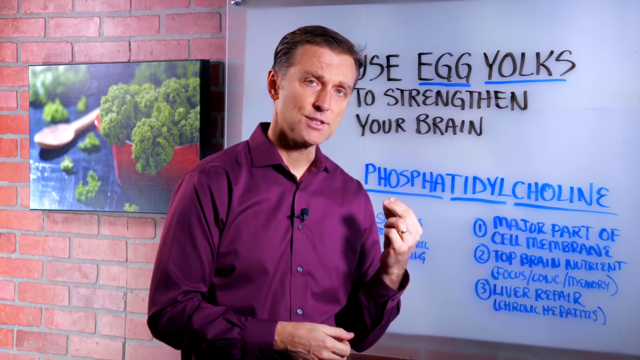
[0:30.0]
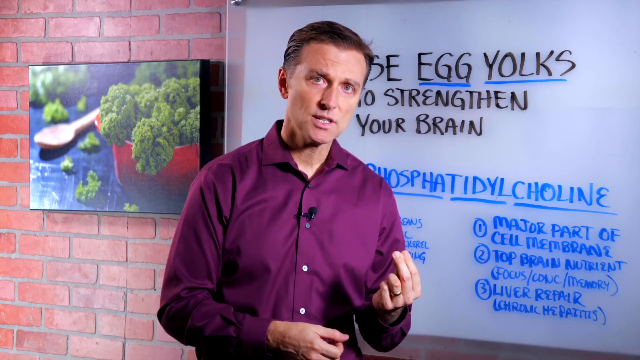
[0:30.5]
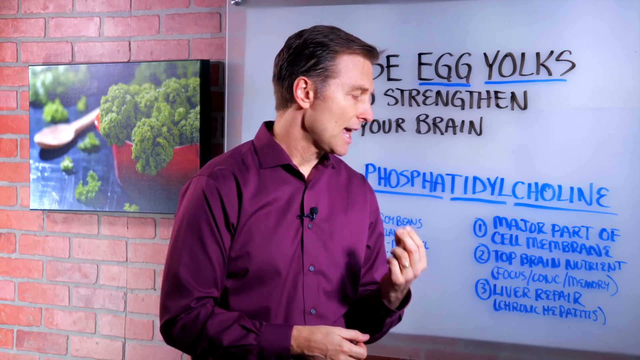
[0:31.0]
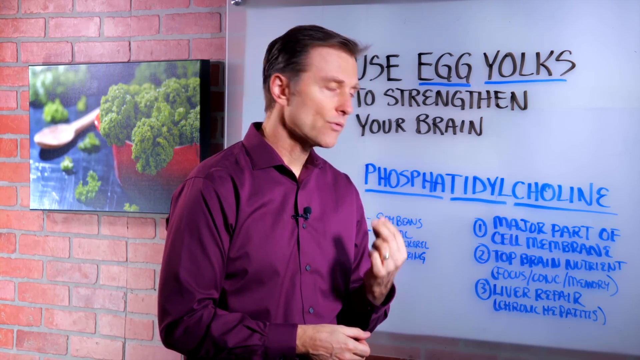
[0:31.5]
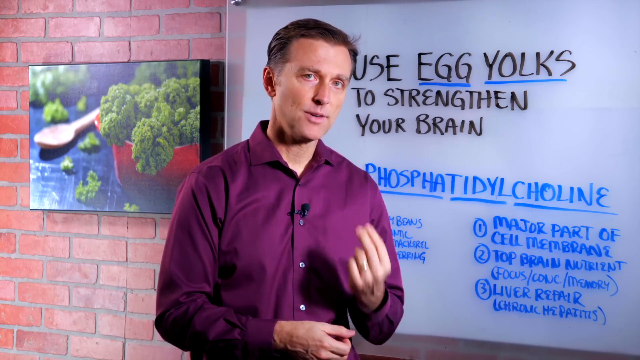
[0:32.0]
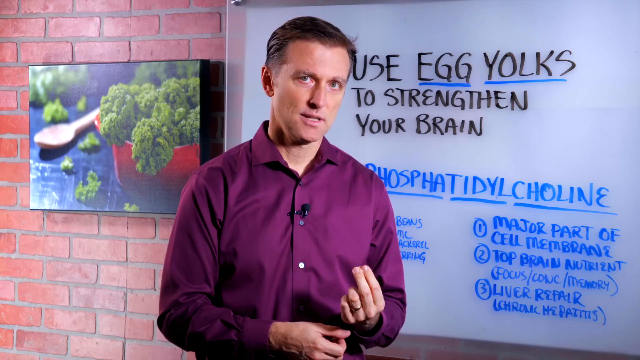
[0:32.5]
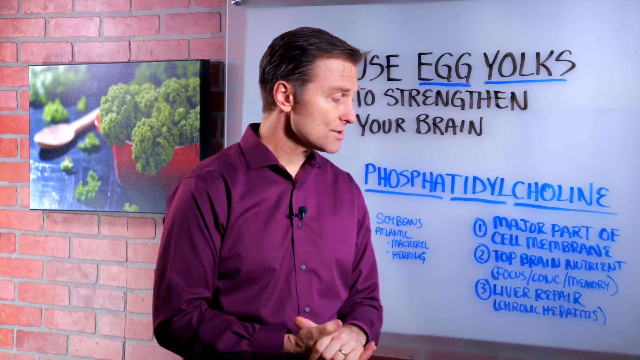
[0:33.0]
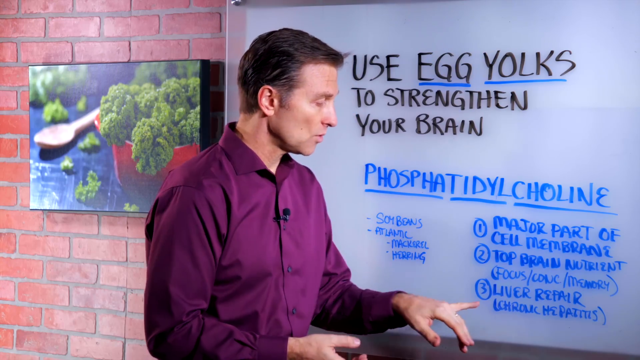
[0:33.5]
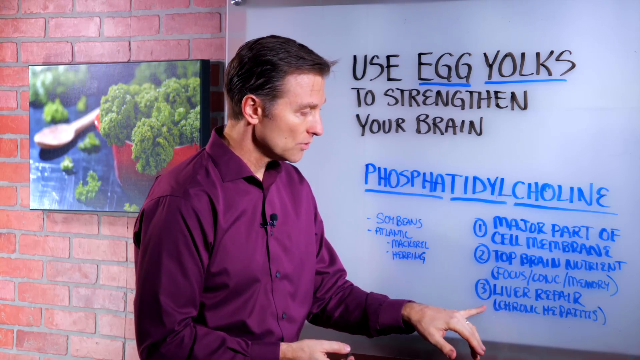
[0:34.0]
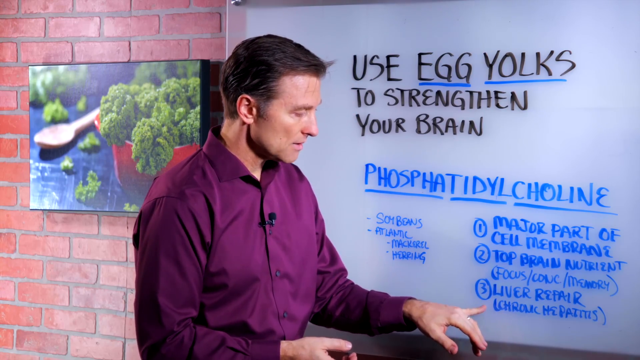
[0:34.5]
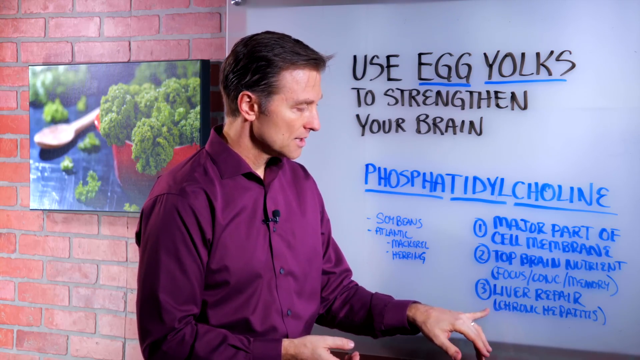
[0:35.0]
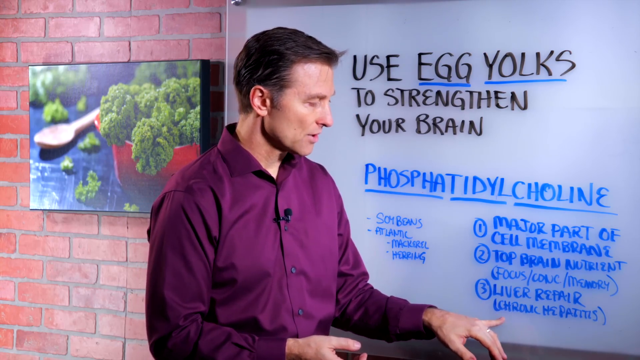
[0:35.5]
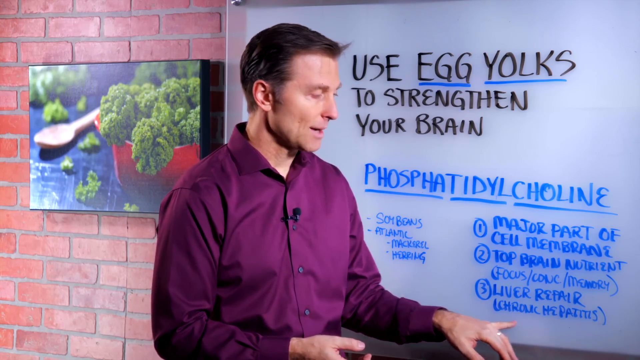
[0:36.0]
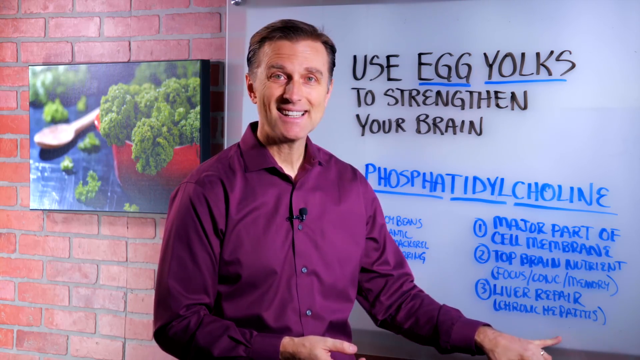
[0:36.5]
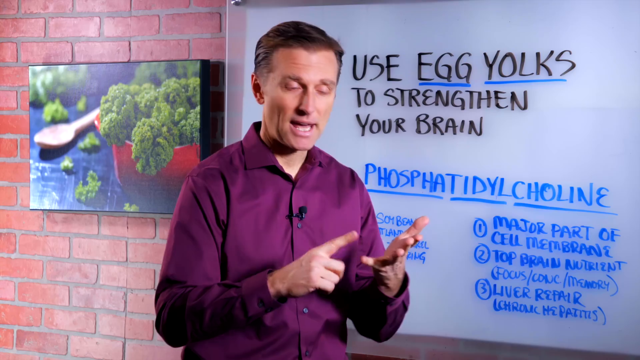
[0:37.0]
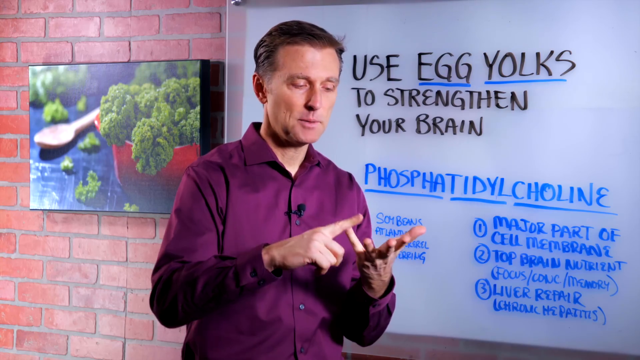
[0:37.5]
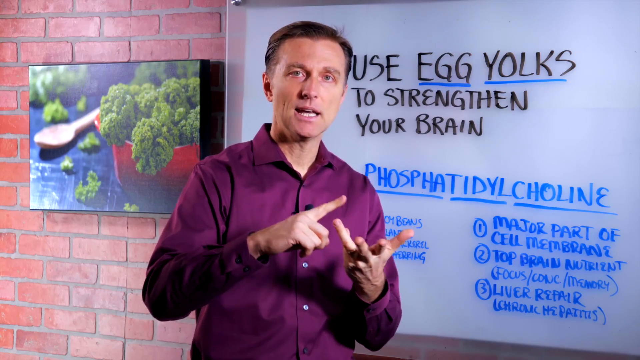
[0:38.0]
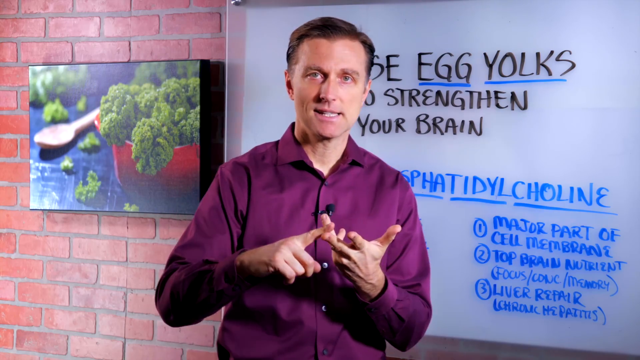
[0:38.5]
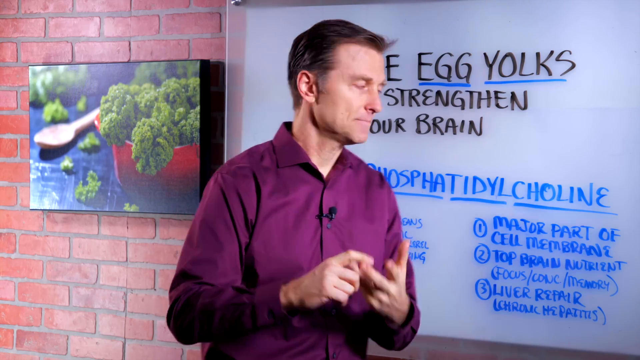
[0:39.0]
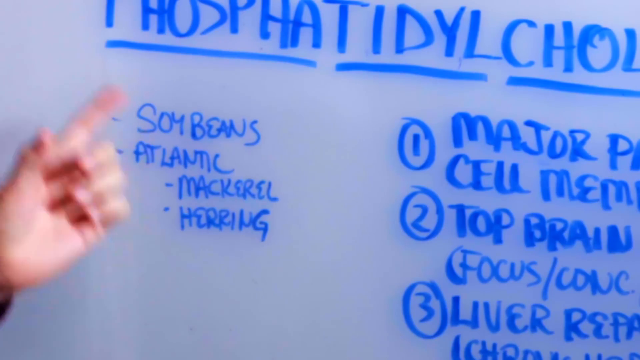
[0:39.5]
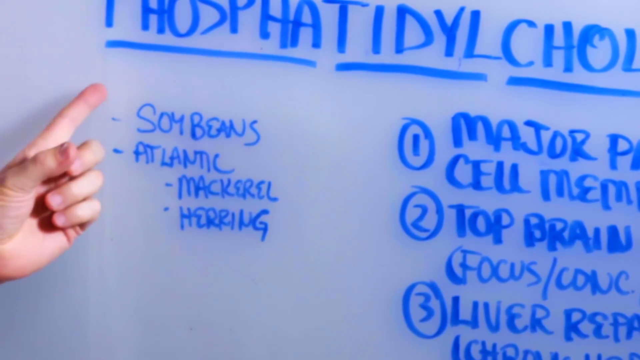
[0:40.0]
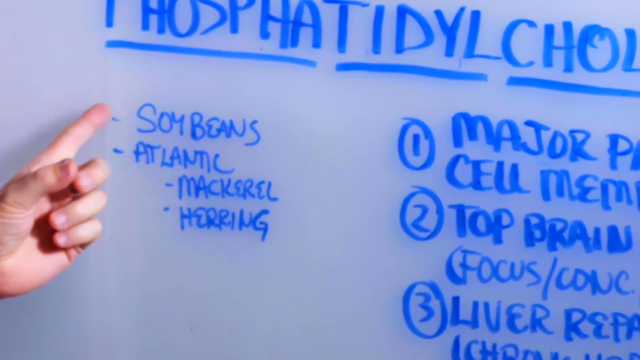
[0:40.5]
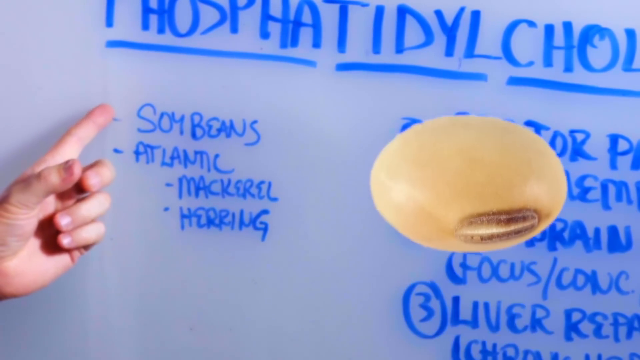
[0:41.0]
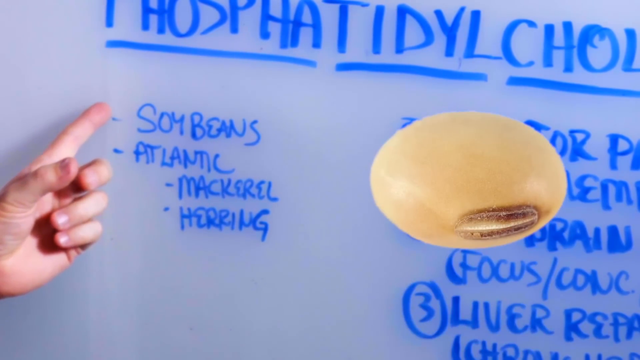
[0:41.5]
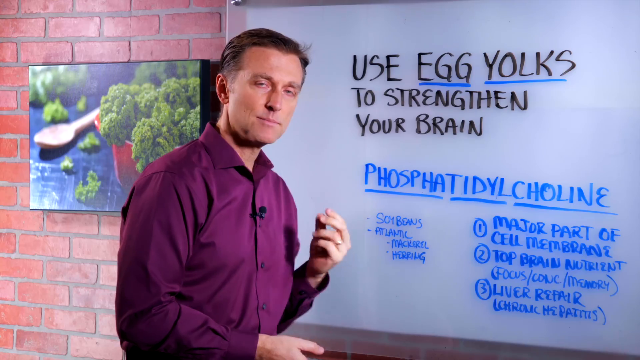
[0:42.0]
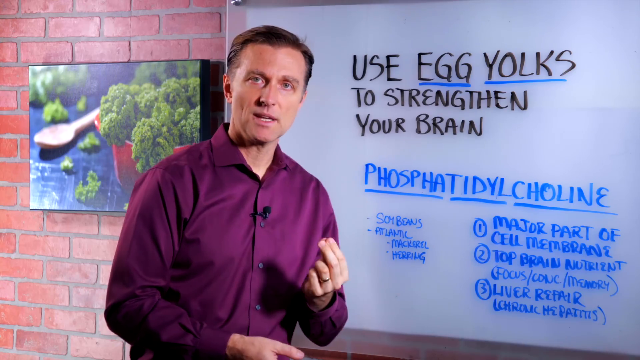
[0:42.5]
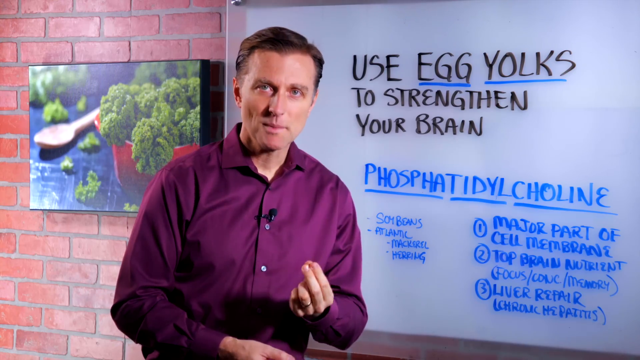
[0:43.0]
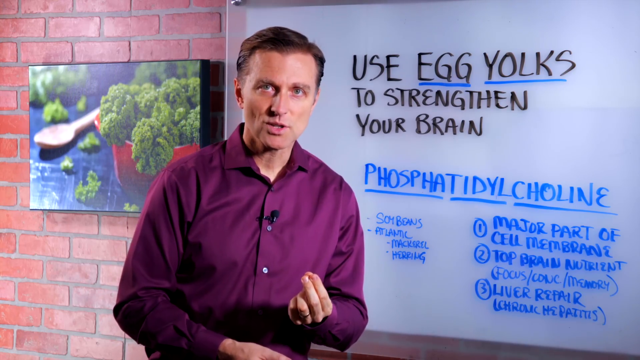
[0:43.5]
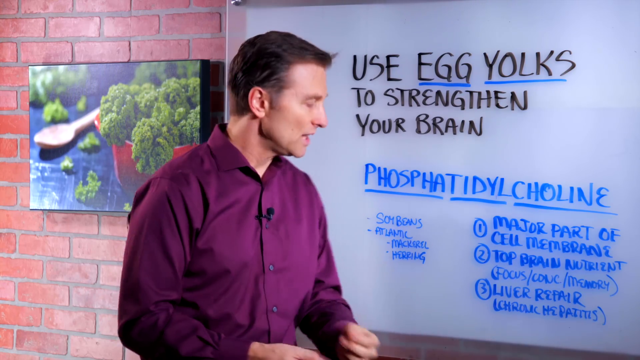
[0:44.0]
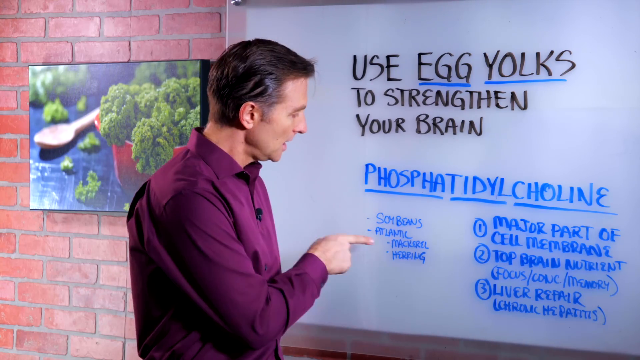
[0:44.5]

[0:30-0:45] A Caucasian man with a white complexion, who may be British or American or possibly Australian, lectures in front of a dry erase board. No other subjects really appear, though once in a while a soybean pops up on screen. He has short dark hair, is clean-shaven, and wears a purple or magenta button-down shirt with the top button unbuttoned. Otherwise the scene is almost static.